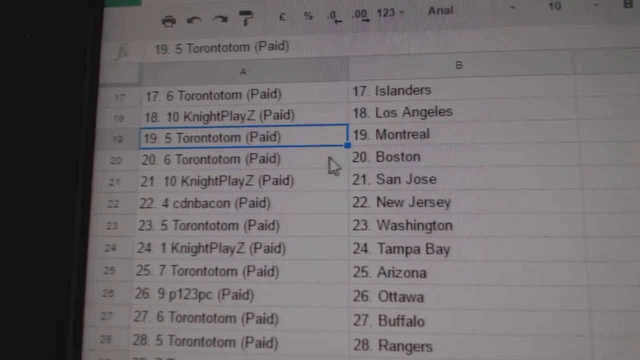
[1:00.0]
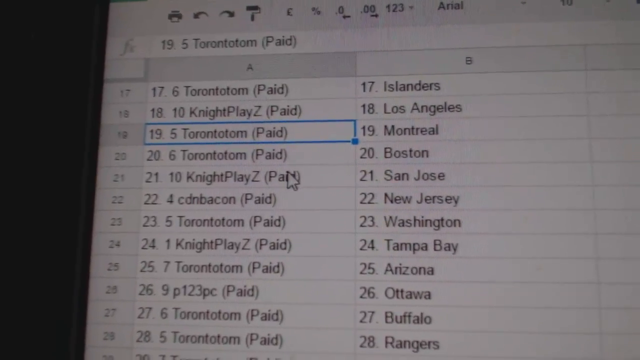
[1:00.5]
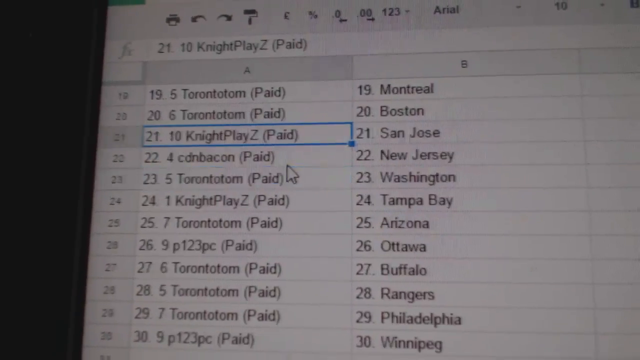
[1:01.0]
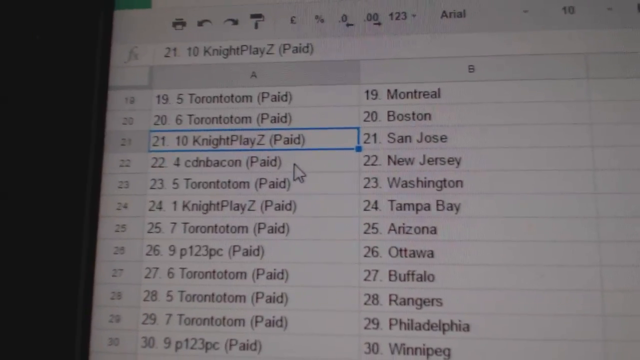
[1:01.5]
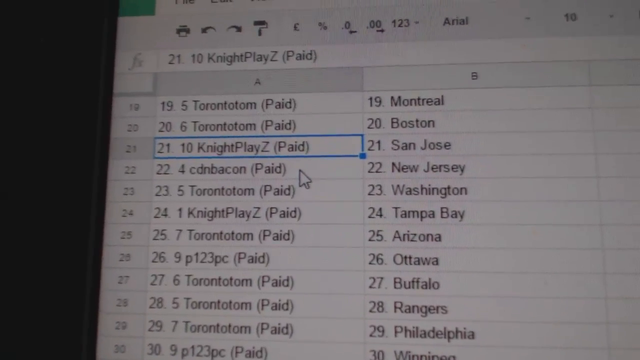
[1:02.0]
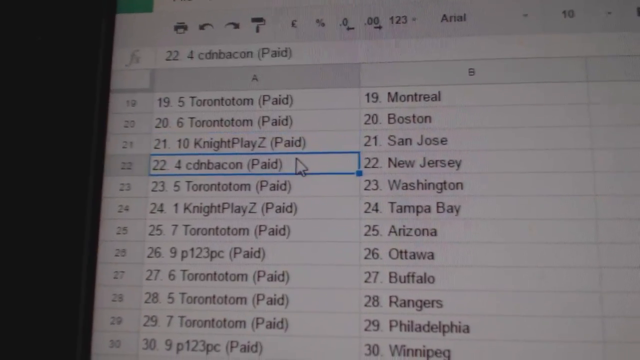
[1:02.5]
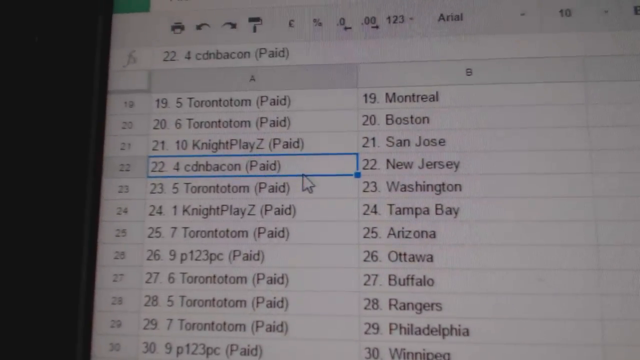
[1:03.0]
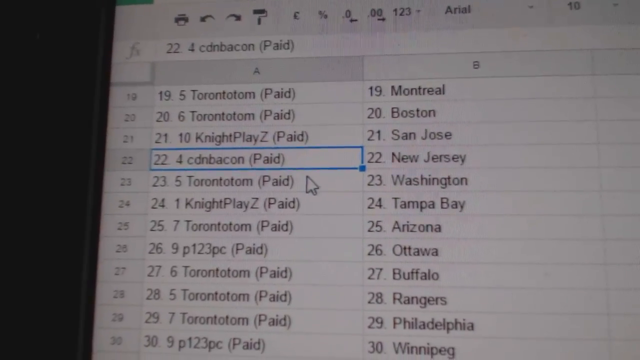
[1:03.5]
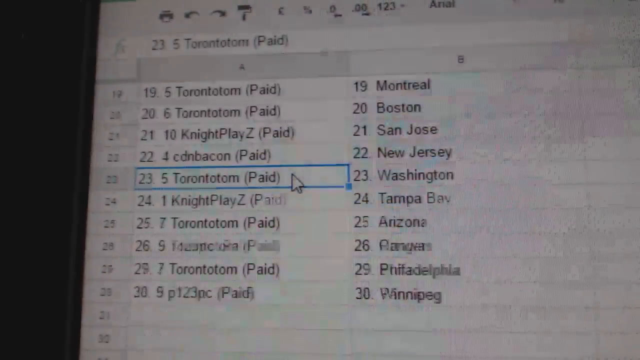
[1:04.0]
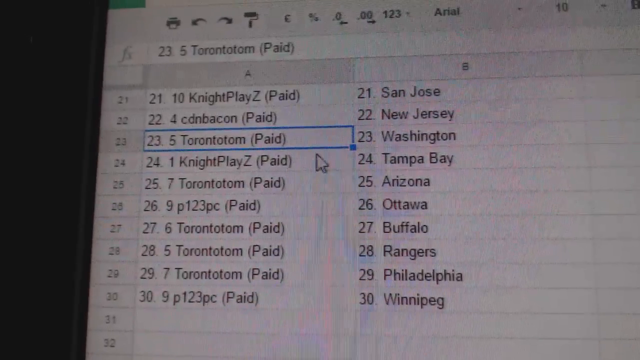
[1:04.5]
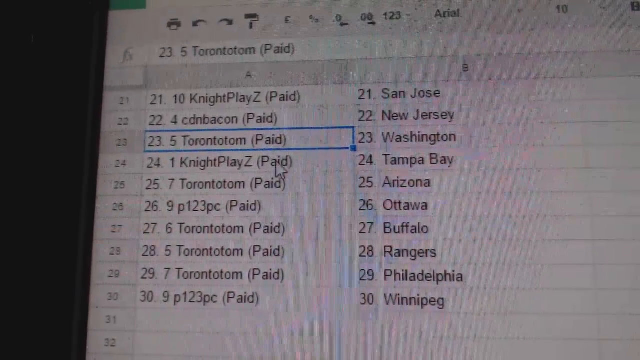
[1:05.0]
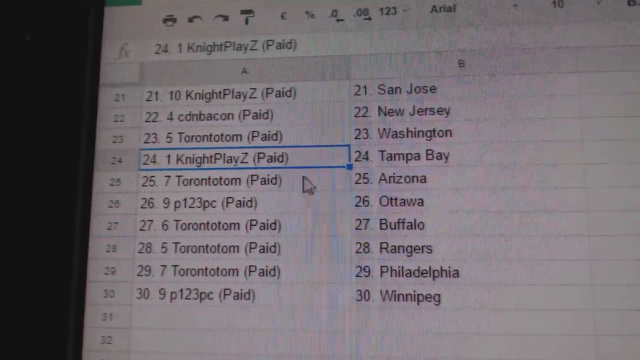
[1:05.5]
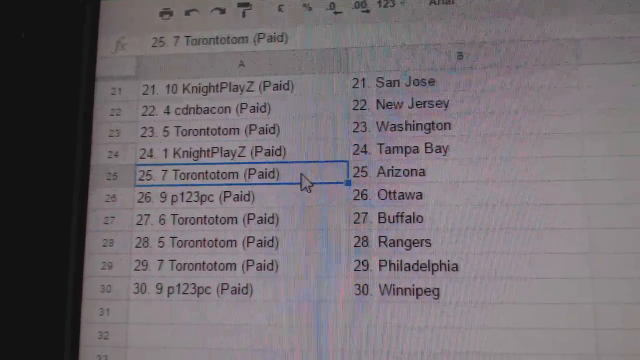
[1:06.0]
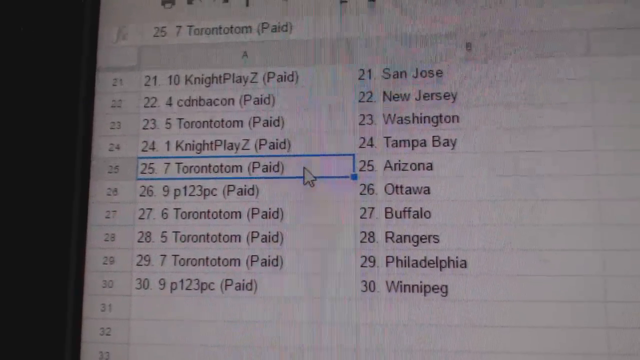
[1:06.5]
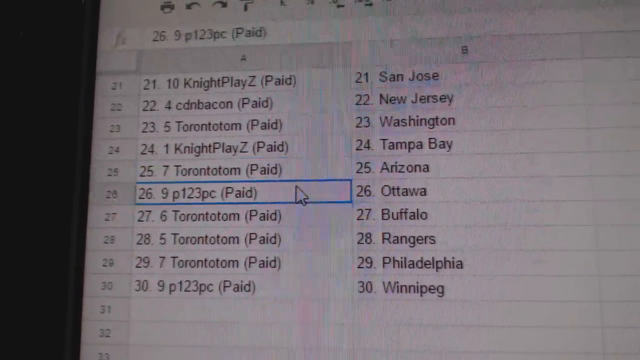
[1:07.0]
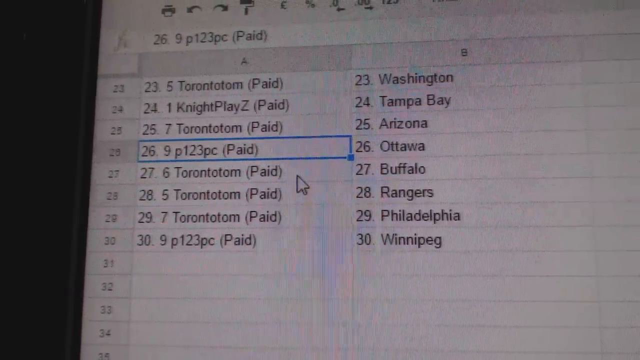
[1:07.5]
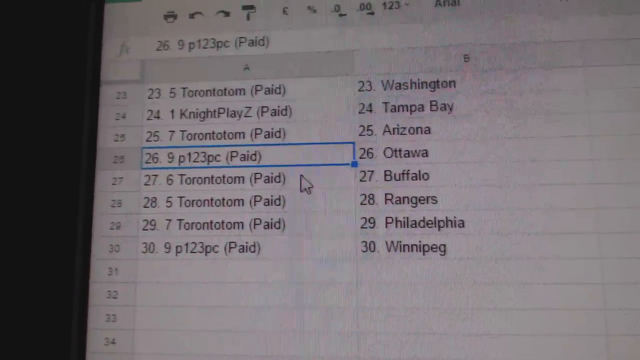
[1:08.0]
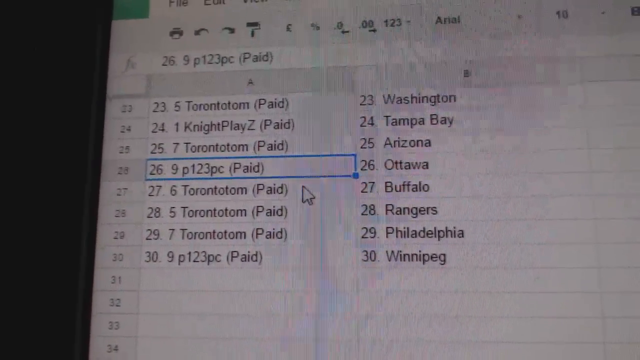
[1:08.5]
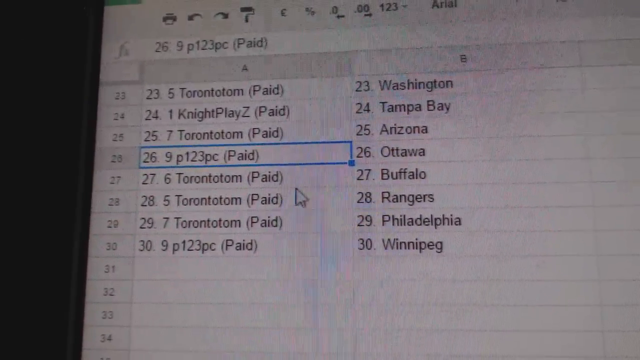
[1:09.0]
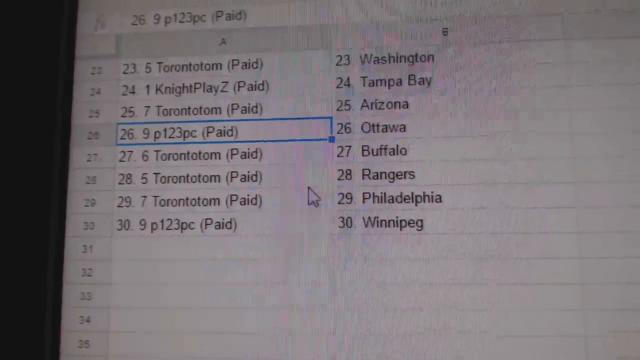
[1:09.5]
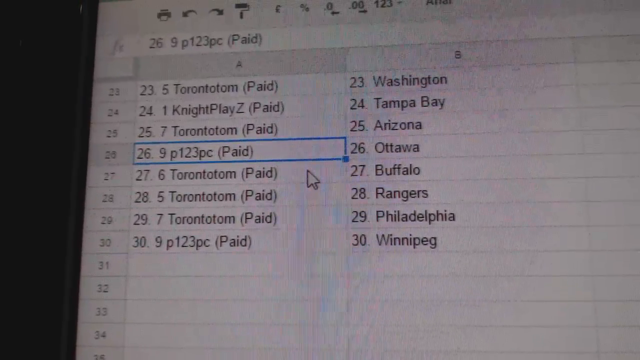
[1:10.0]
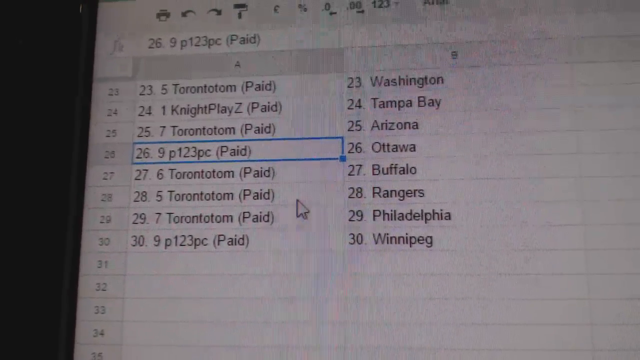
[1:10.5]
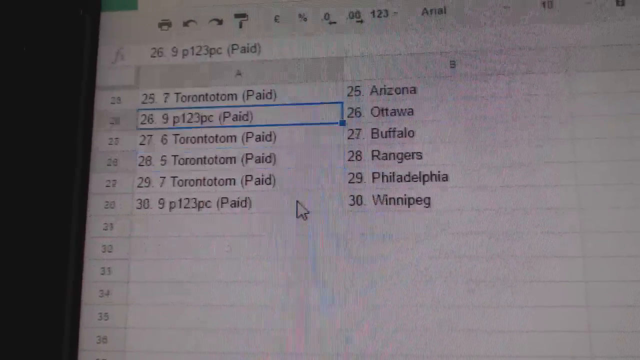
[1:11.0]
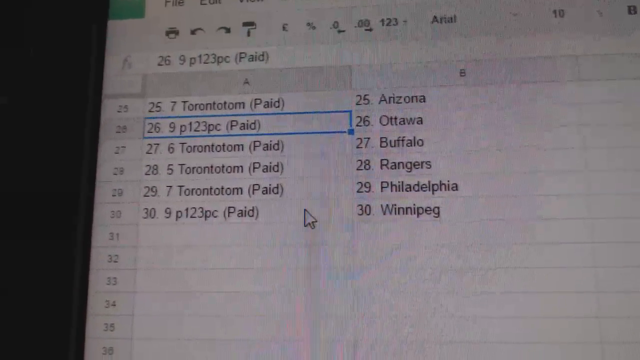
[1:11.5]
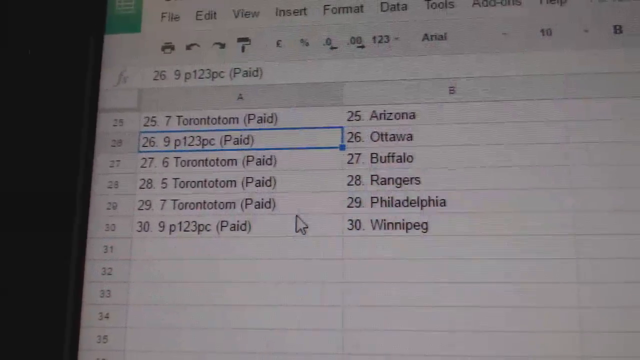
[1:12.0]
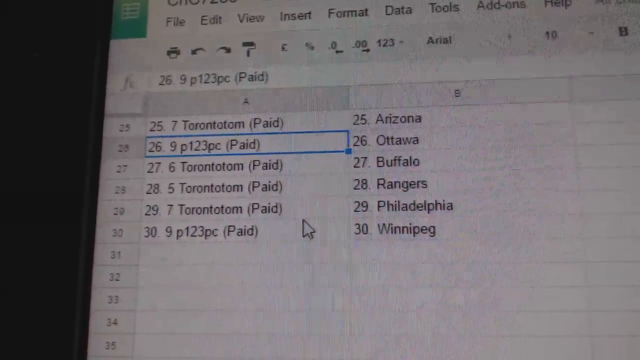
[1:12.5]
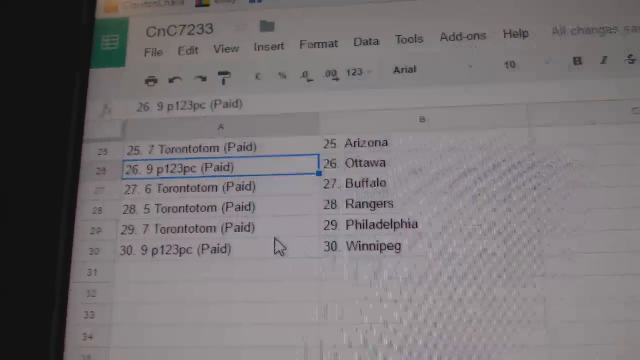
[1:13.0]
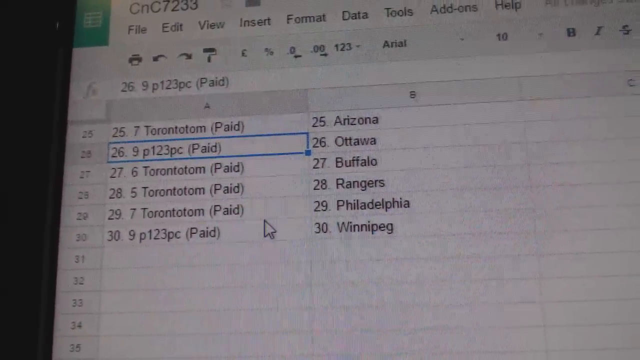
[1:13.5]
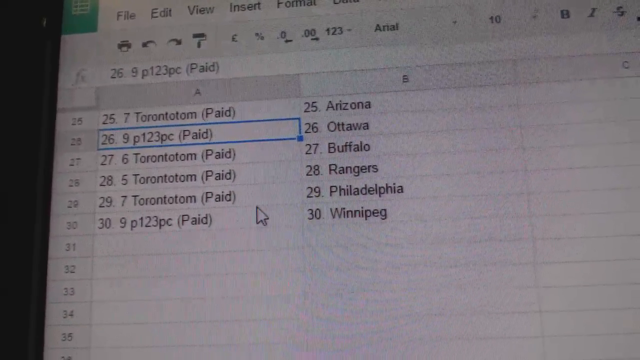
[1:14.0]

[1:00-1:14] One cell reads "torontotom paid." To the left, the name field reads 19, right next to the fx function button. He clicks the cell again and moves to 21, then 22 or 23, and scrolls down with the mouse wheel to 24 and 25. He looks like he is almost hitting the laptop screen by accident, causing blue streaks on it around rows 27 through 30, roughly between A27 to A30 and B27 to B30. He scrolls a little more but does not click anything.